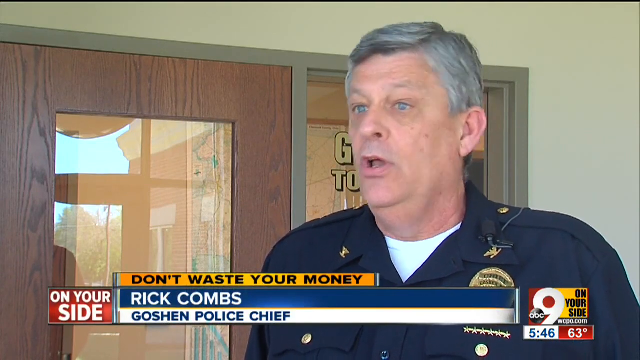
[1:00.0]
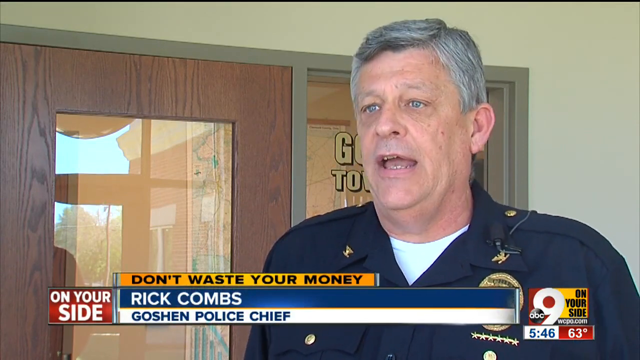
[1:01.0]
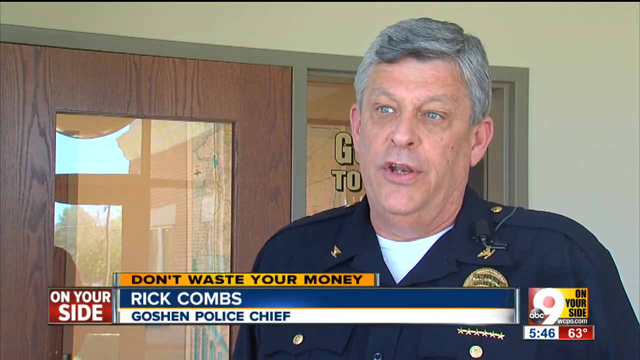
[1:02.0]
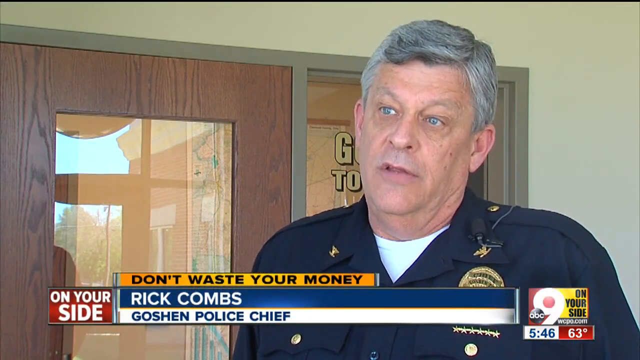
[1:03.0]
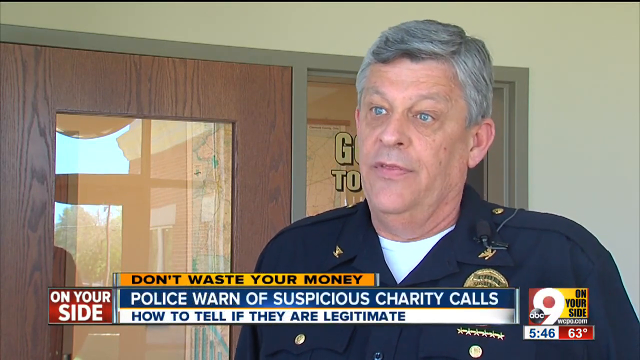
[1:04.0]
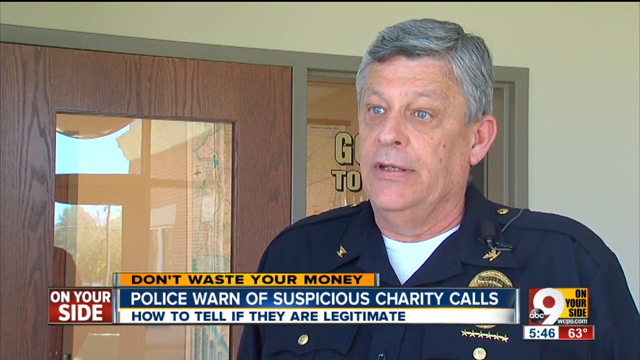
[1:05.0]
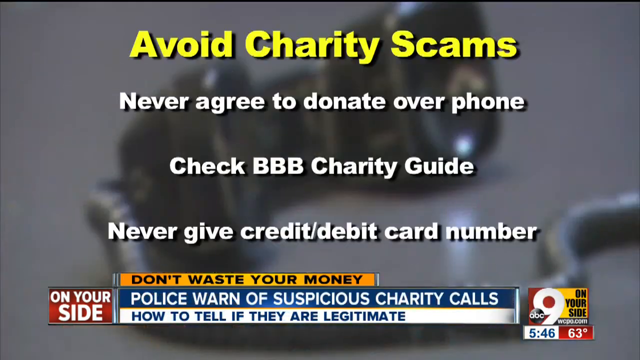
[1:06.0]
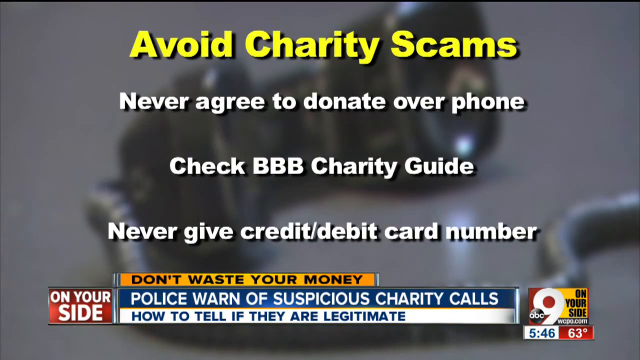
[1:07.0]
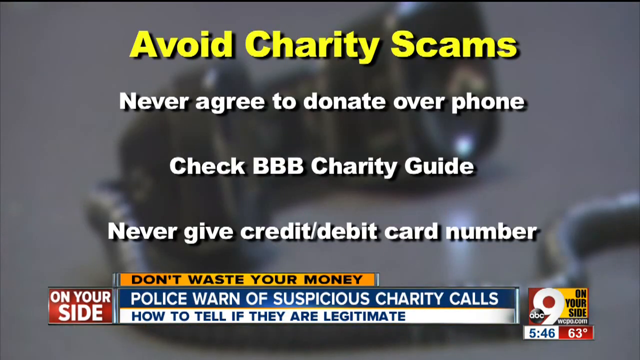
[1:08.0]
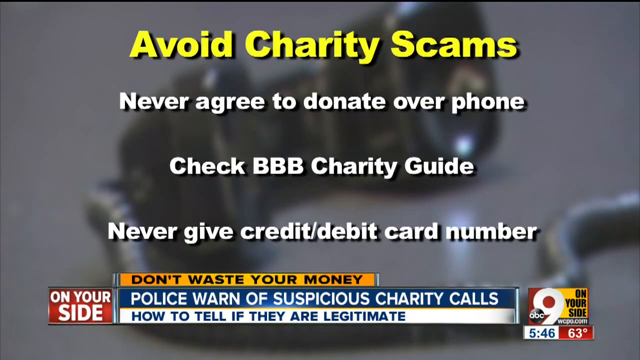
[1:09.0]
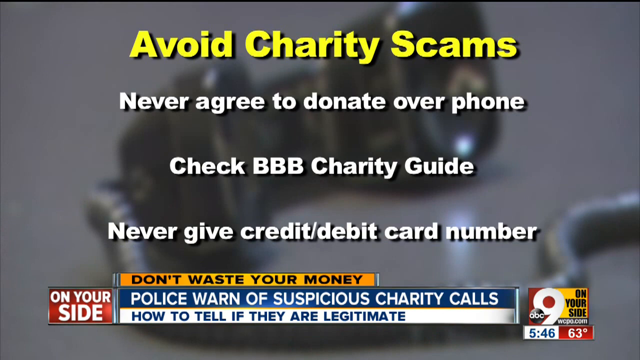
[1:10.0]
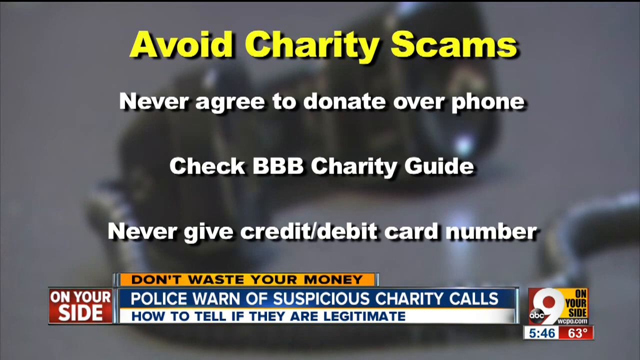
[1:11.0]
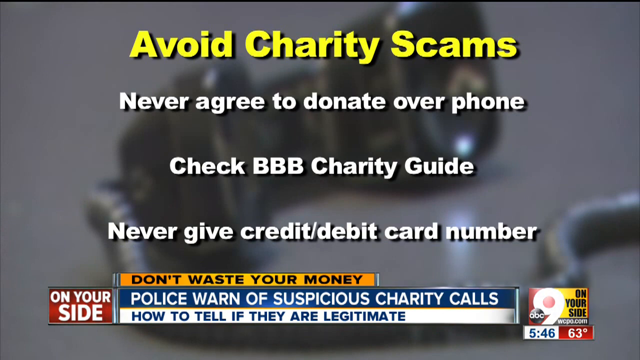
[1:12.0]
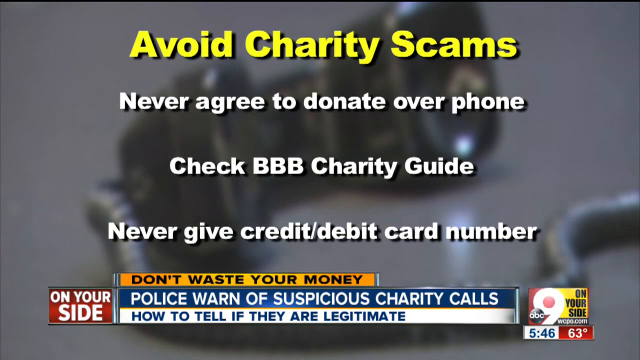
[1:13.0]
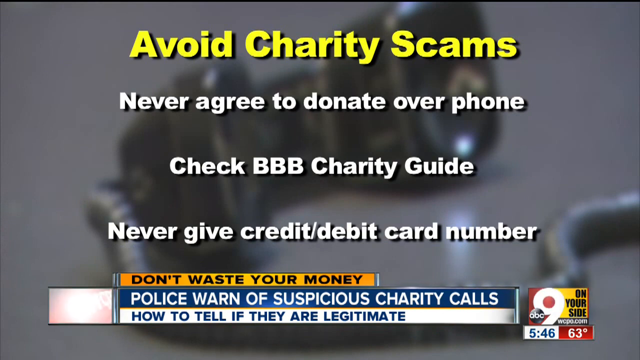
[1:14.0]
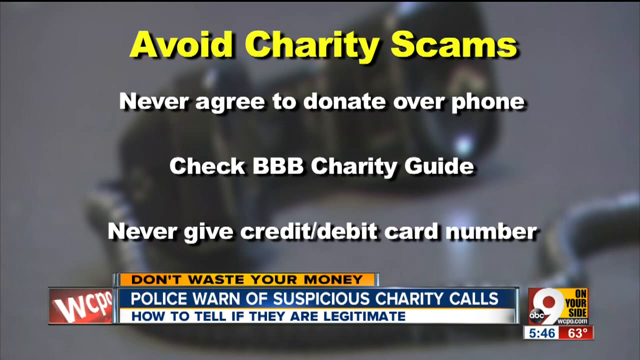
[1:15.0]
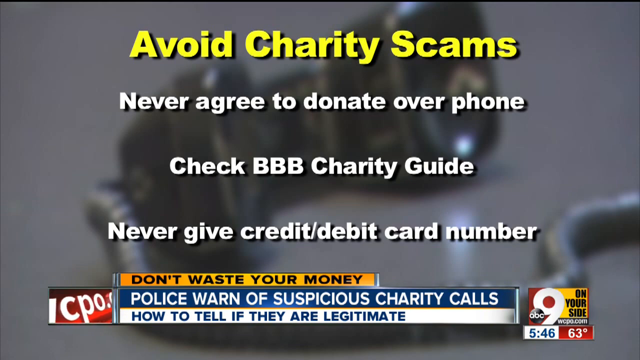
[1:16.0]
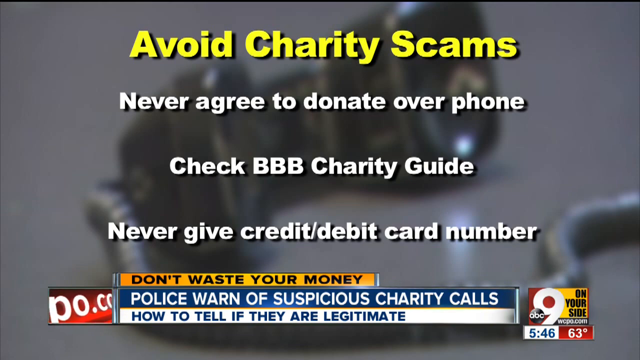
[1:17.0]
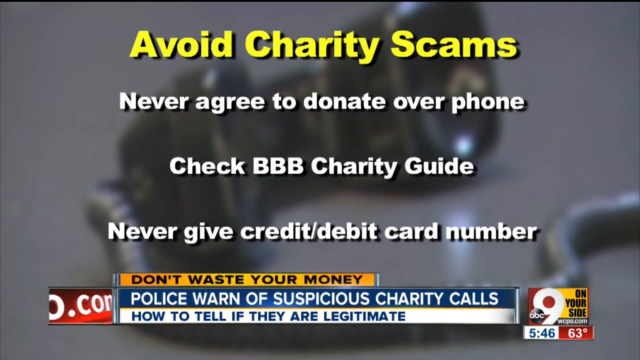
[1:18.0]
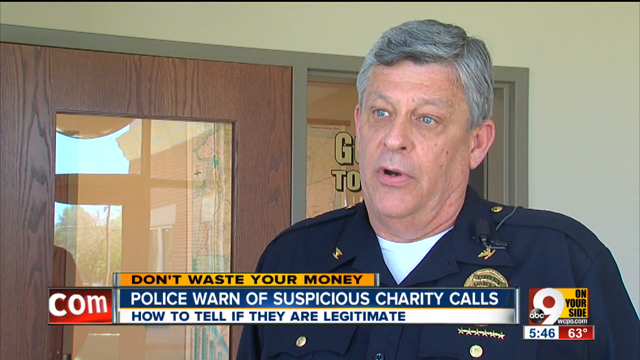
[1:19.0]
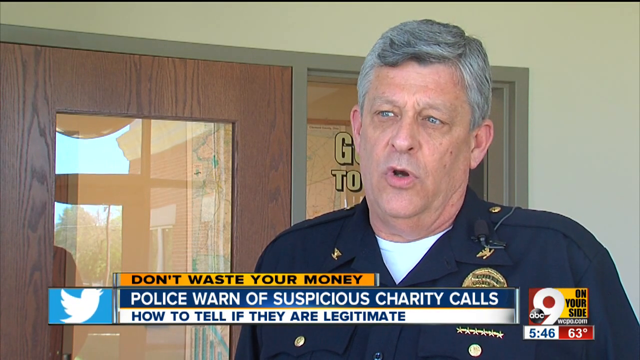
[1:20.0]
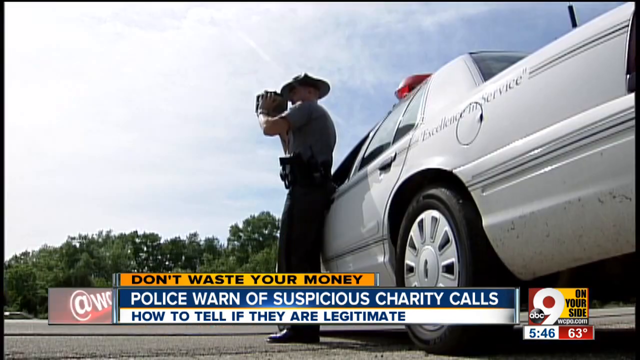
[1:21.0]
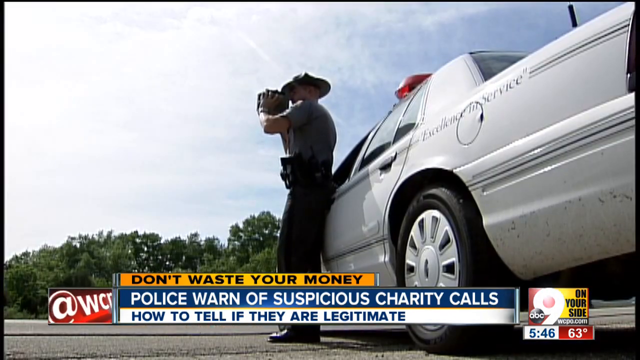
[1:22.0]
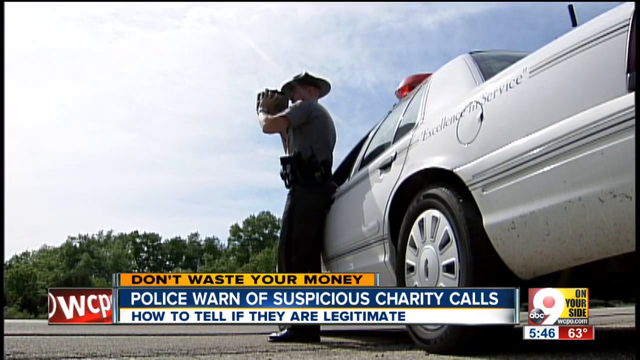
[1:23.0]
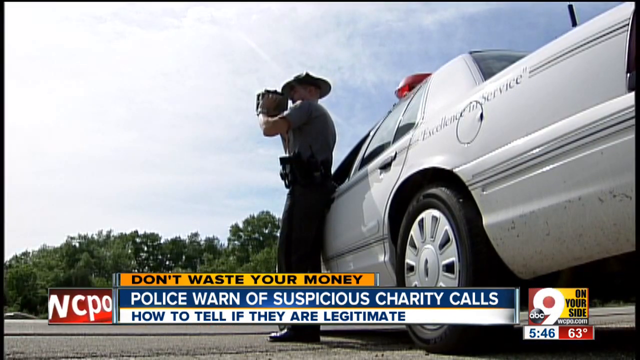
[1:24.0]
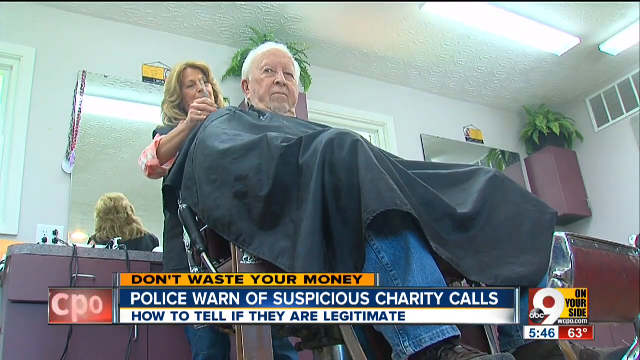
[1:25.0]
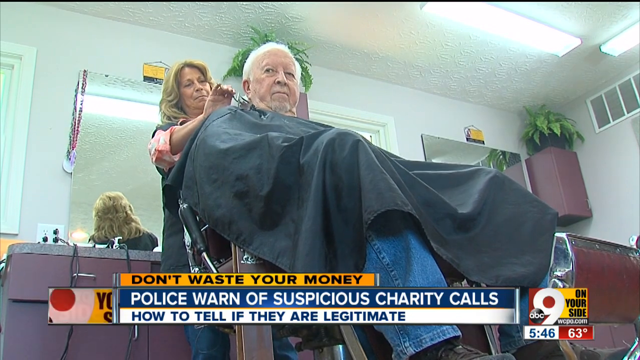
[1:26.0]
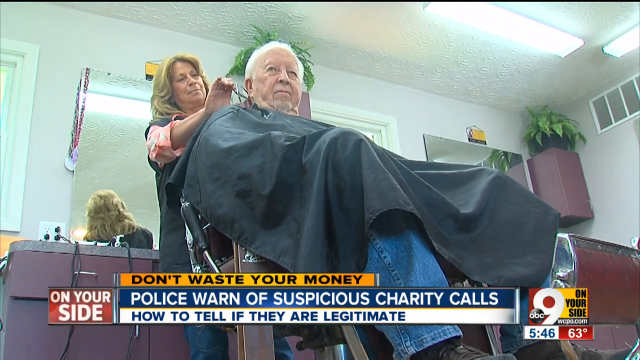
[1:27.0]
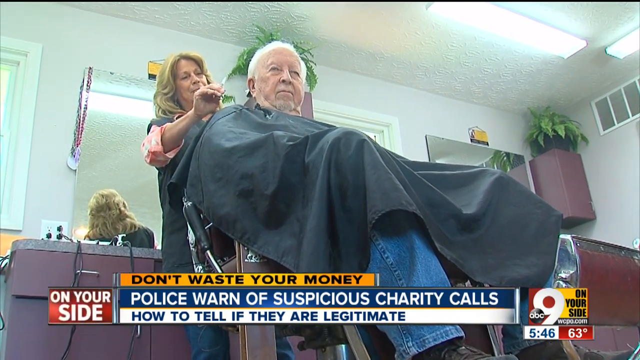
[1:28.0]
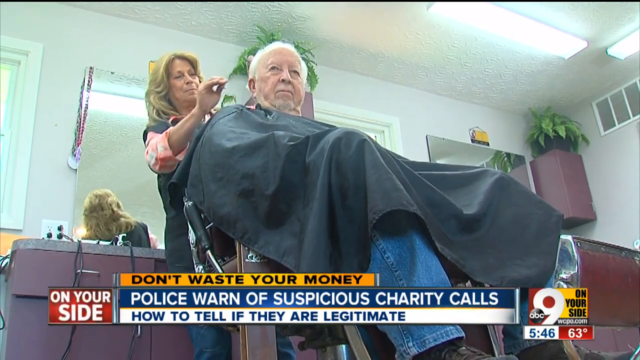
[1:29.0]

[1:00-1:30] The policeman, Rick Combs, continues being interviewed. Text appears on the screen reading "Avoid charity scams" in yellow, followed by "Never agree to donate over the phone," "Check the BBC Charity Guide" and "Never give credit or debit card number"; this information is written in white in three lines. After more of the interview, a police car appears that seems to be white or silver, standing on the side of the road with someone standing outside who seems to be wearing a black uniform and seems to be holding a camera. The video then returns to Rick Combs, still being interviewed.